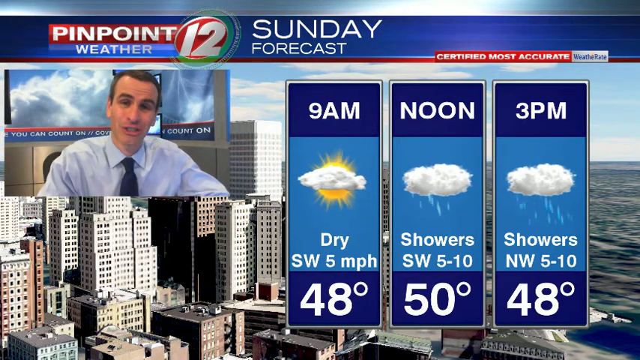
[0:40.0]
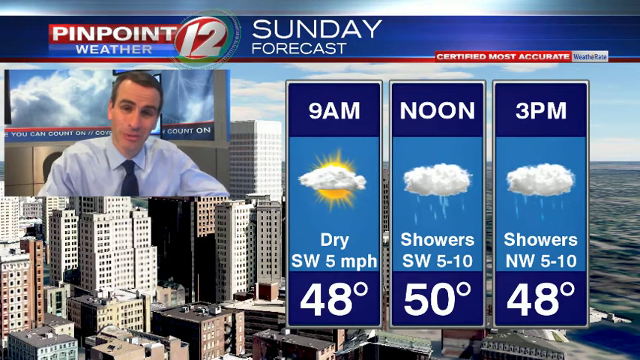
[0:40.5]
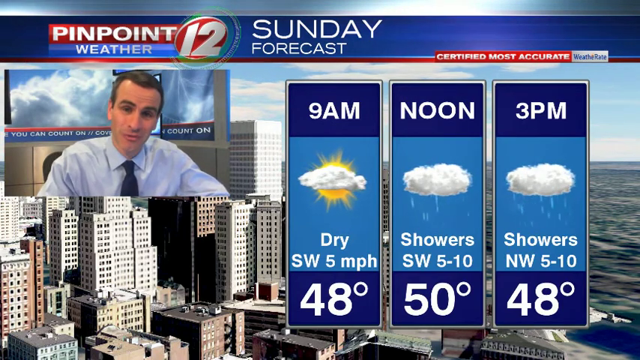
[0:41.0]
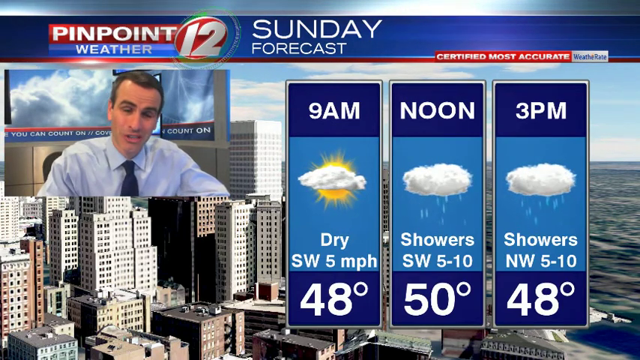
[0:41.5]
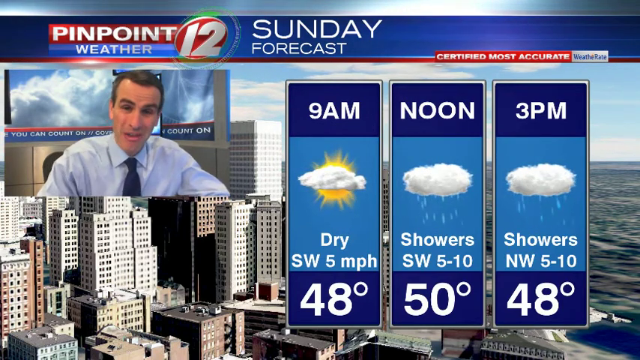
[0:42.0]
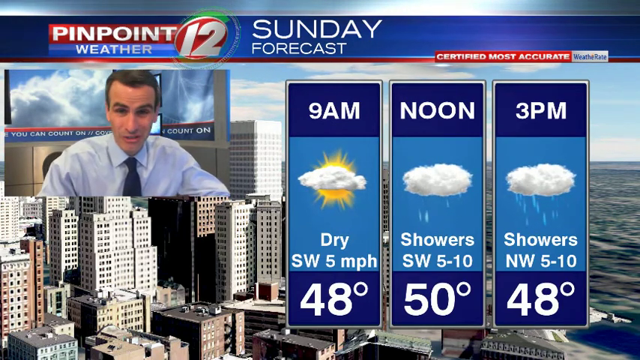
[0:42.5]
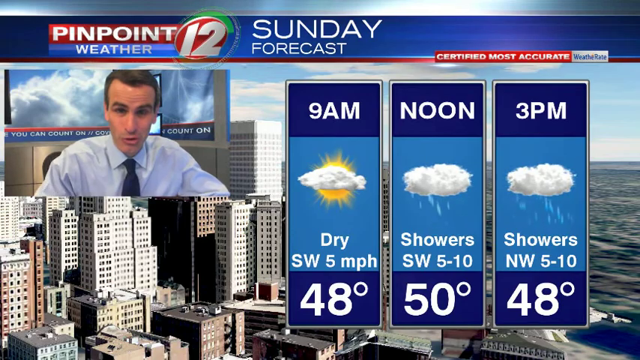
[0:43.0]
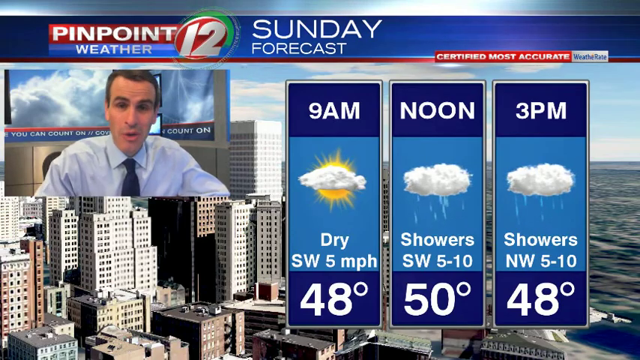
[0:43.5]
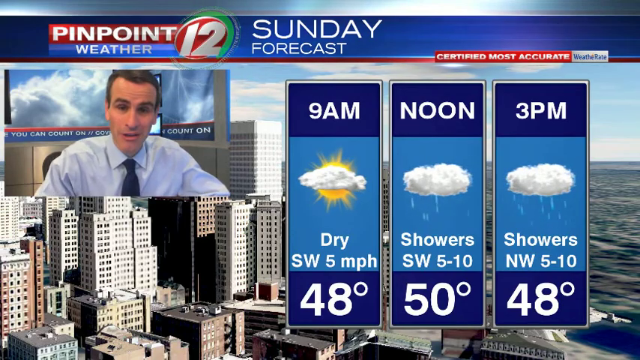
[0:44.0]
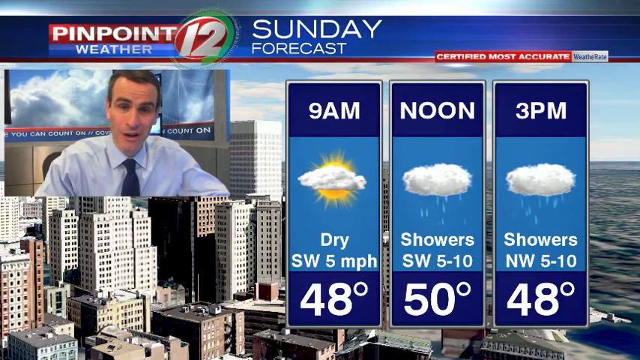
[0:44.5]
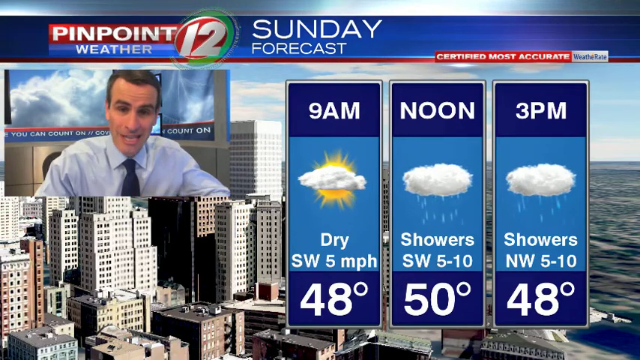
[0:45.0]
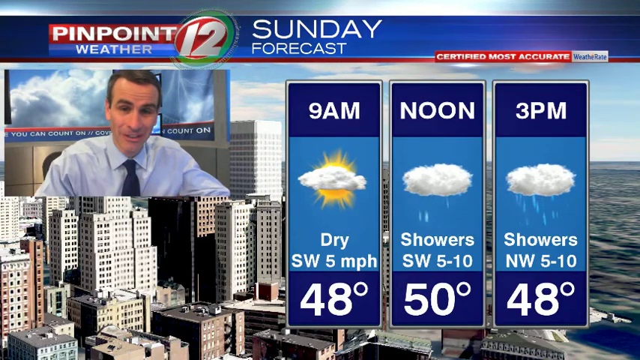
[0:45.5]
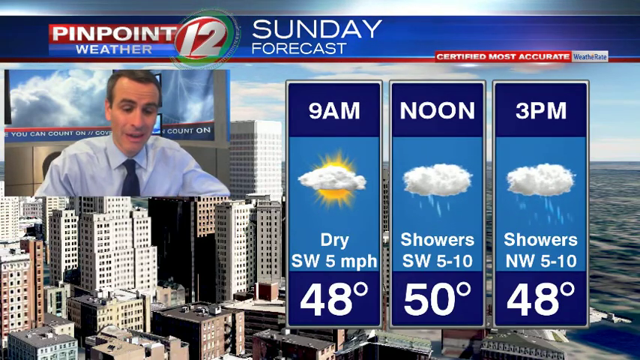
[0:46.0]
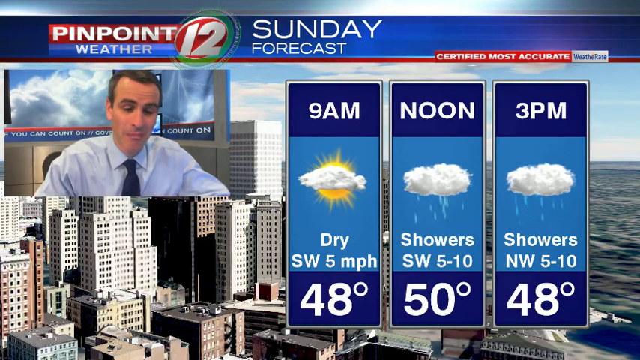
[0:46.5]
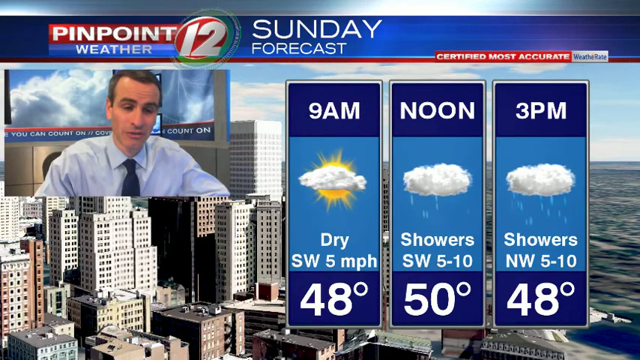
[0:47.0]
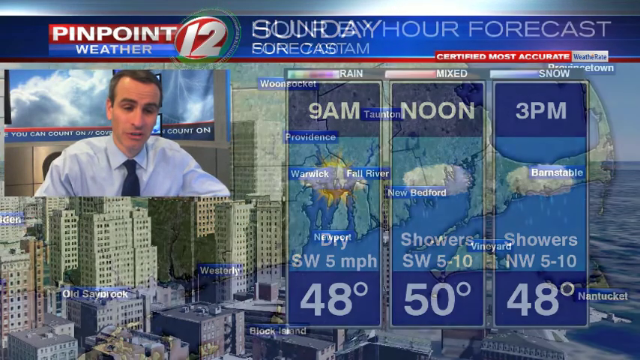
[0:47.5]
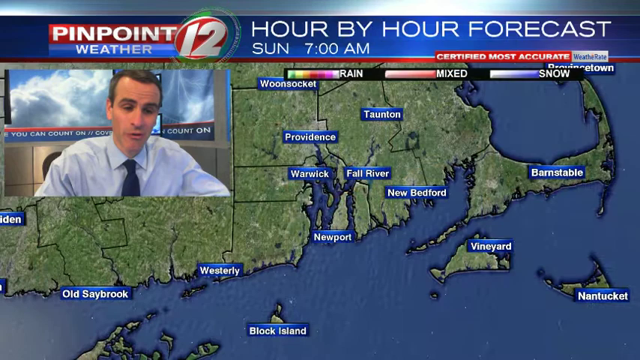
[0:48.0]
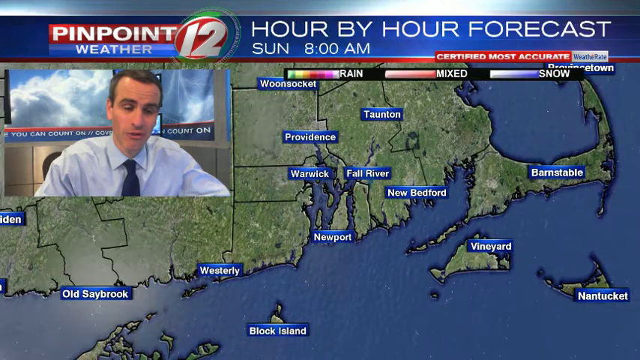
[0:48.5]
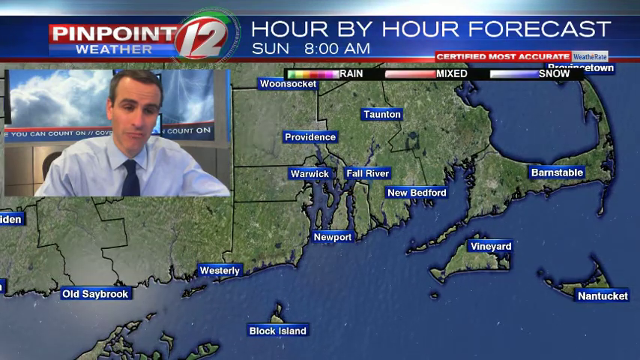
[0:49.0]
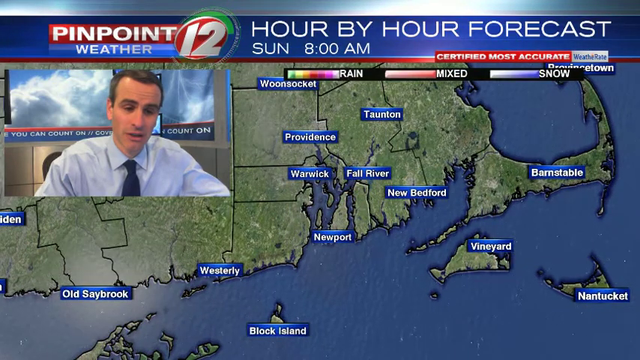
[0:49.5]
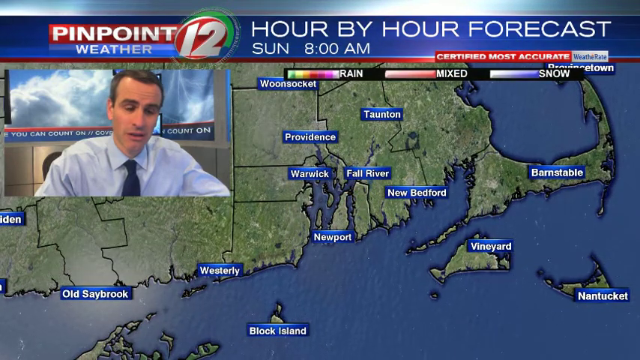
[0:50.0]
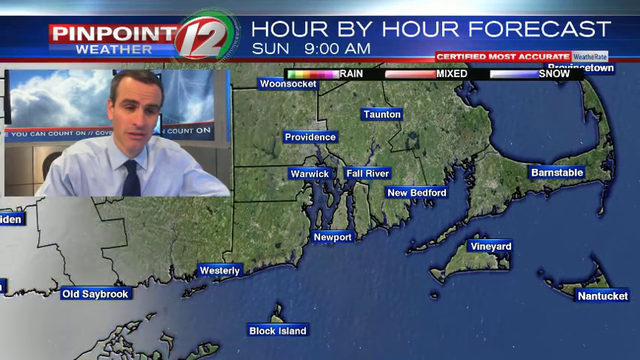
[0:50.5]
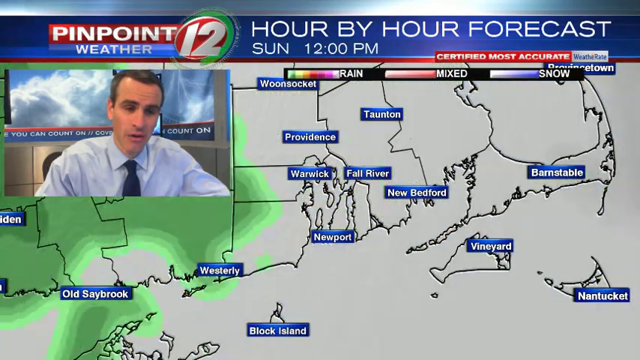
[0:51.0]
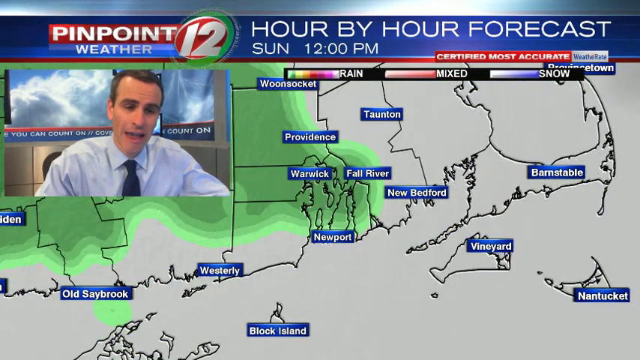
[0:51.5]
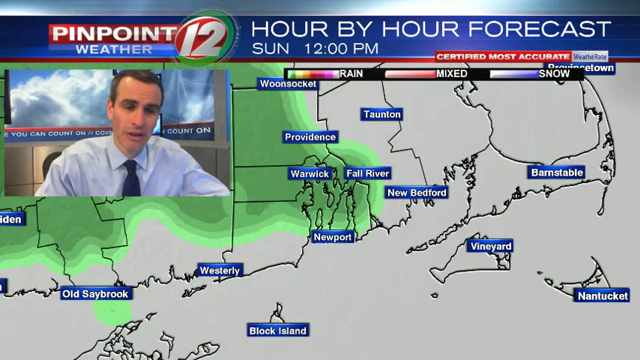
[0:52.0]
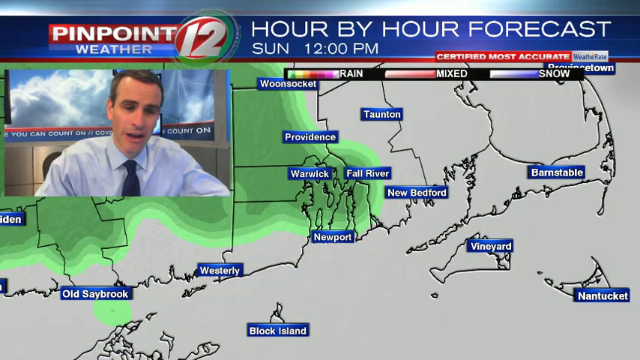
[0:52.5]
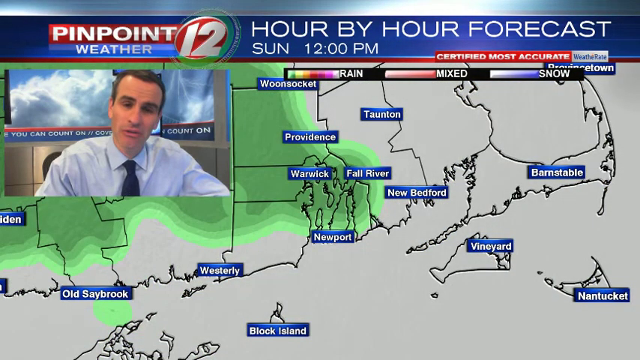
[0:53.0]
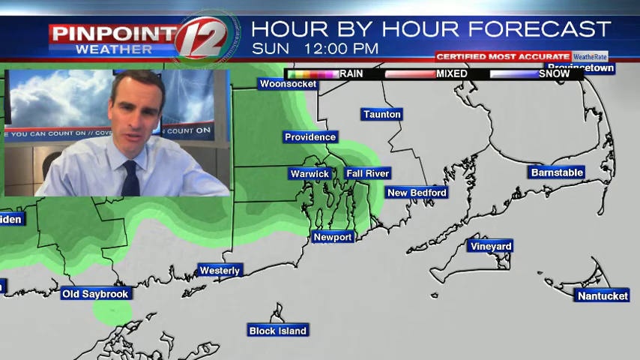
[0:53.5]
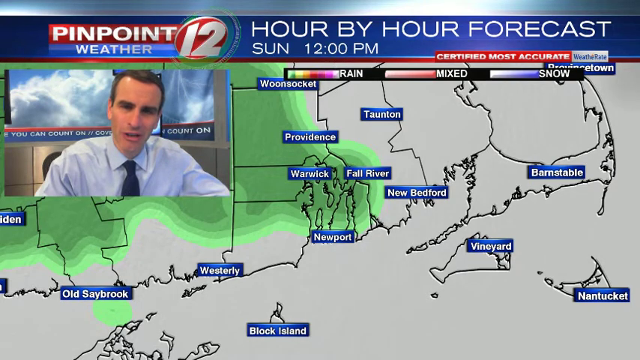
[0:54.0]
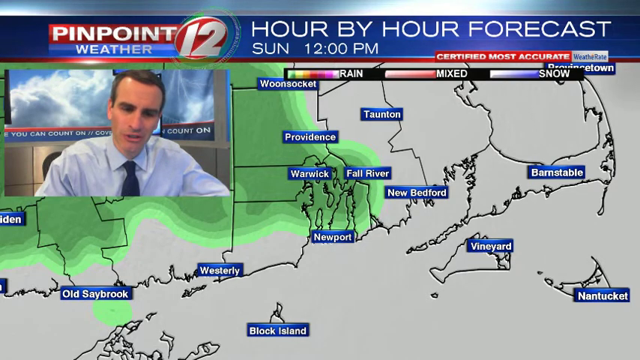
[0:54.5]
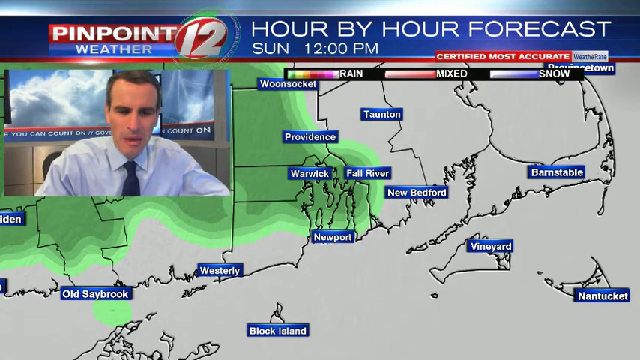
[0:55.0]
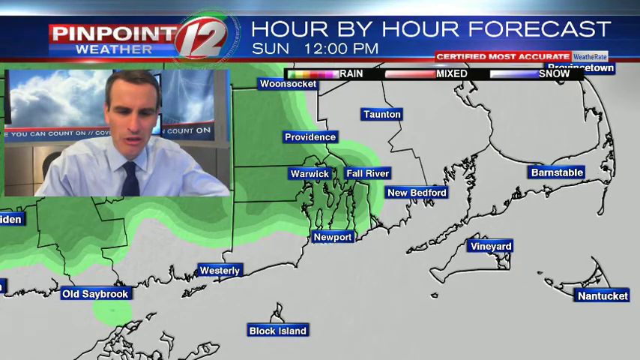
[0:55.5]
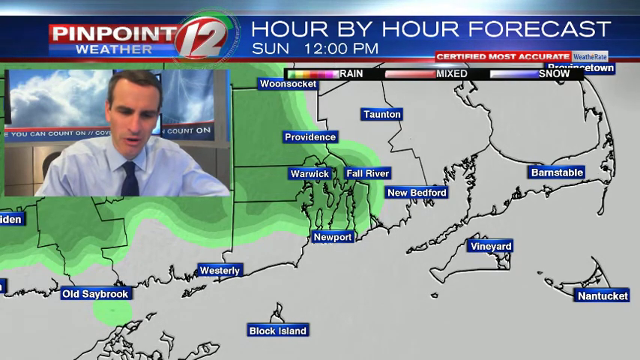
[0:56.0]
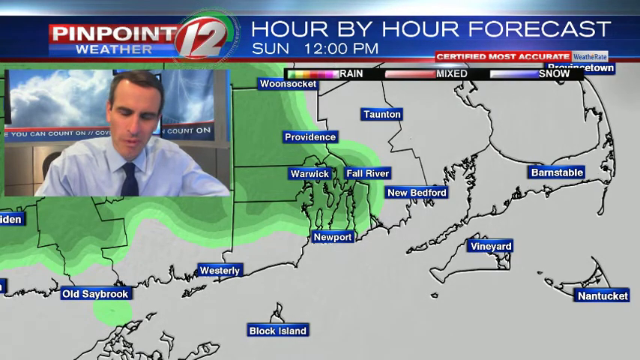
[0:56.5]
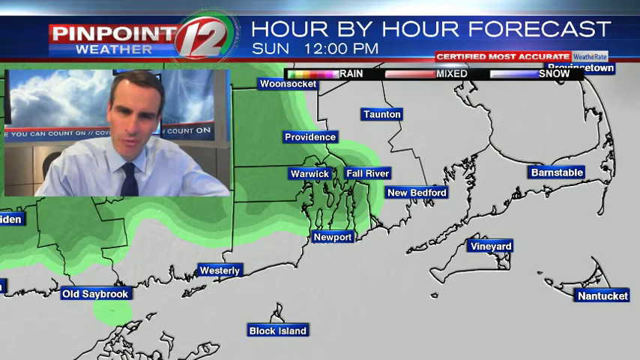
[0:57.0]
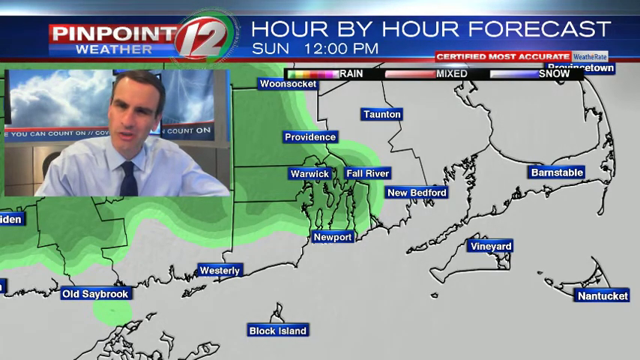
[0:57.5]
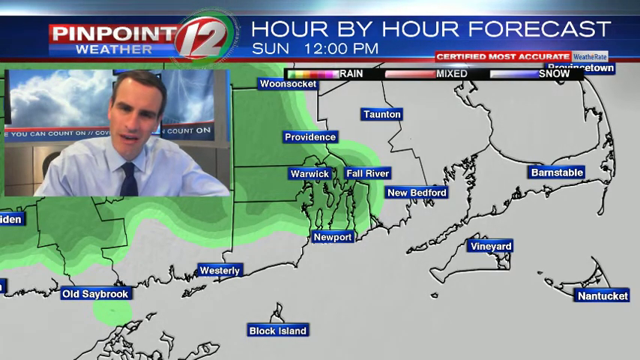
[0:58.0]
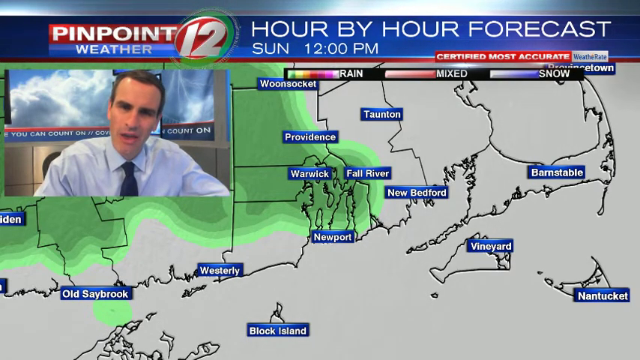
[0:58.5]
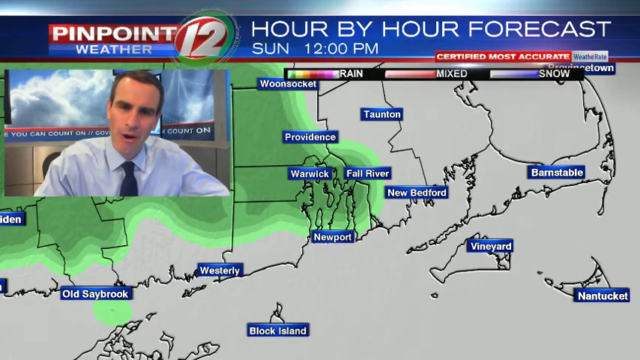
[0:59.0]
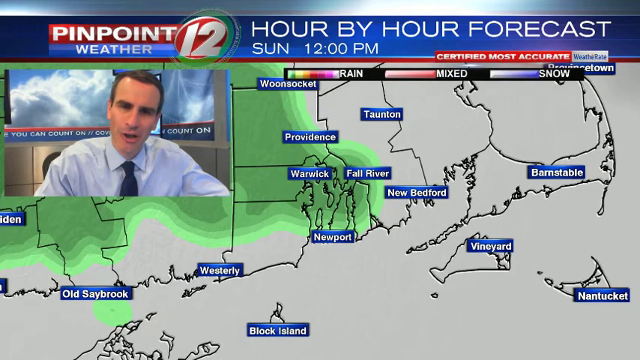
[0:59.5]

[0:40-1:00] The man explains the weather, speaking articulately and moving his hands and eyebrows, now against a different background. The screen reads "hour by hour forecast" with "sun", standing for Sunday, at 12pm. A map shows many places, different regions in America, with the land shaped in green and the ocean in blue. One part is in light green, indicating different types of rain in that area, while the rest of the places are not highlighted in light green and have no rain. The man talks and raises his eyebrows in front of the camera, apparently discussing what is shown on the screen. Places shown include Newport and Vineyard, among many others.